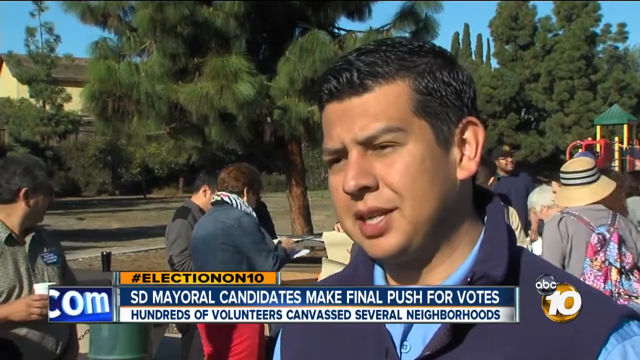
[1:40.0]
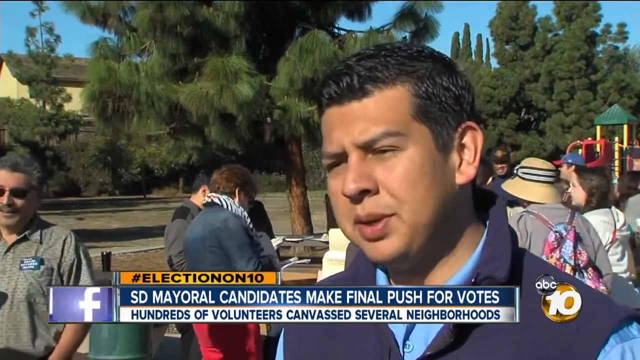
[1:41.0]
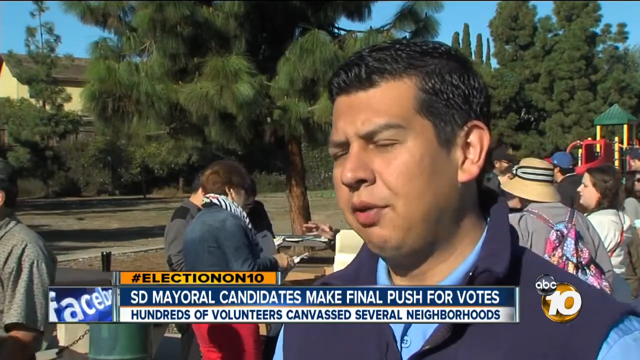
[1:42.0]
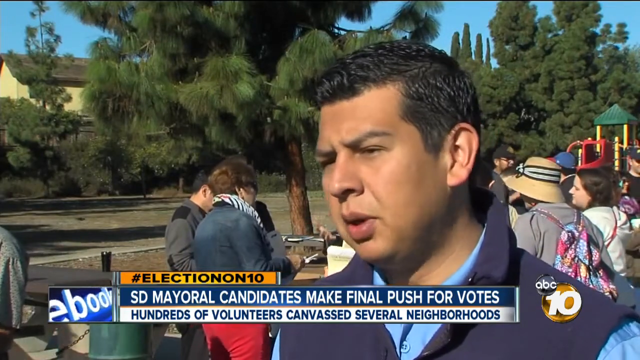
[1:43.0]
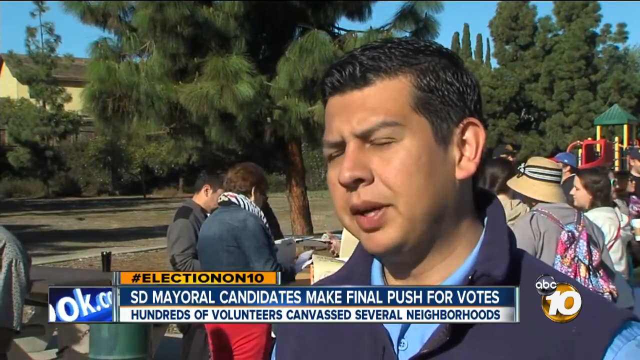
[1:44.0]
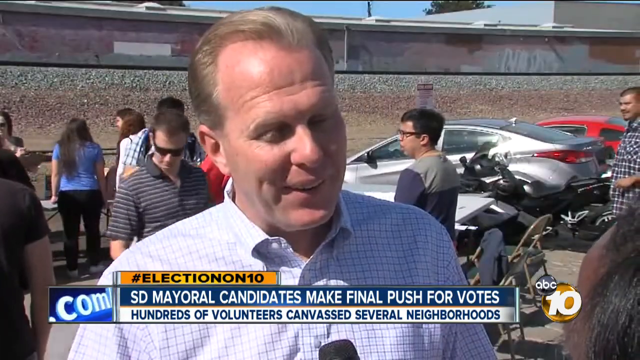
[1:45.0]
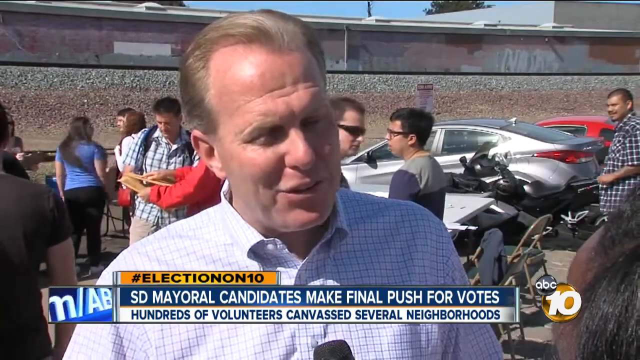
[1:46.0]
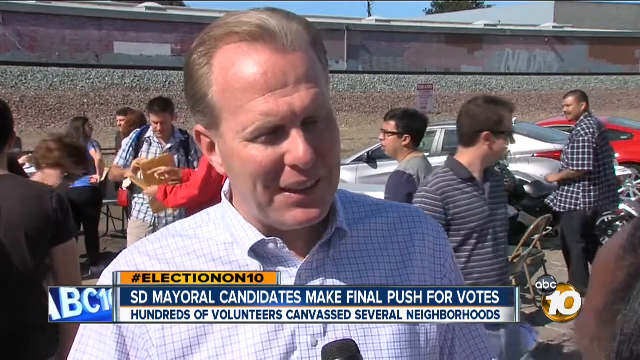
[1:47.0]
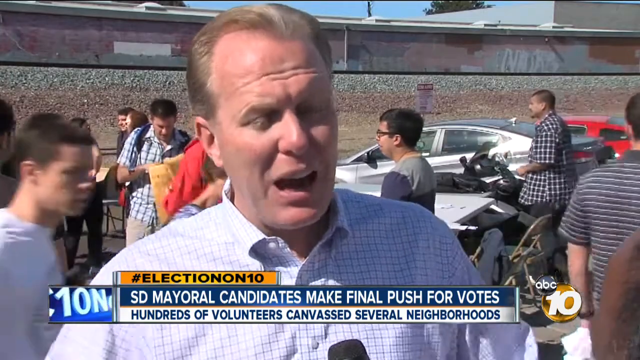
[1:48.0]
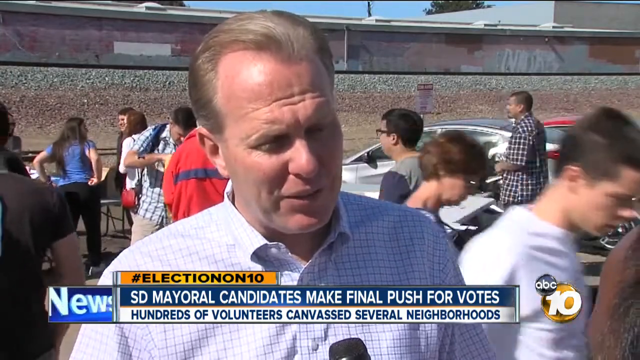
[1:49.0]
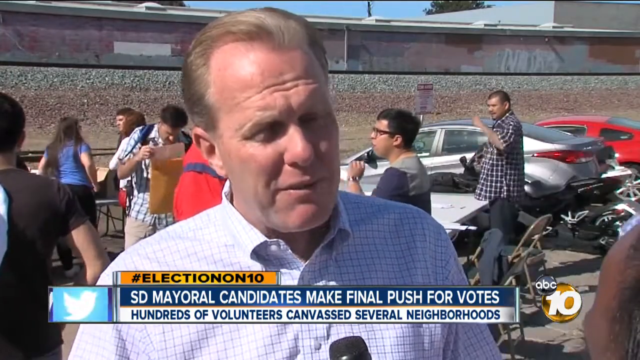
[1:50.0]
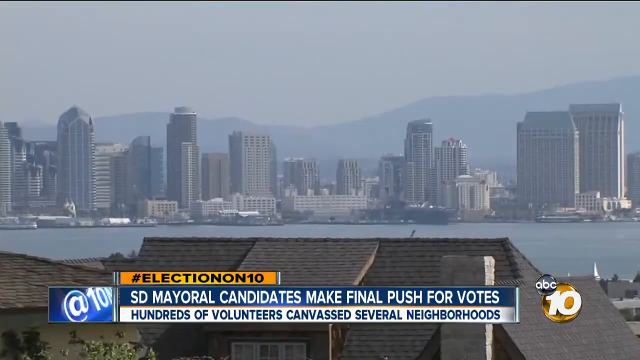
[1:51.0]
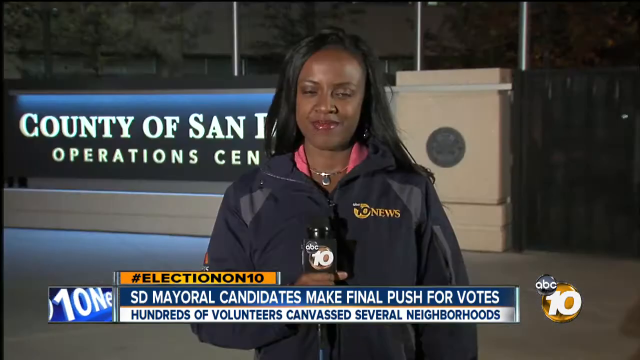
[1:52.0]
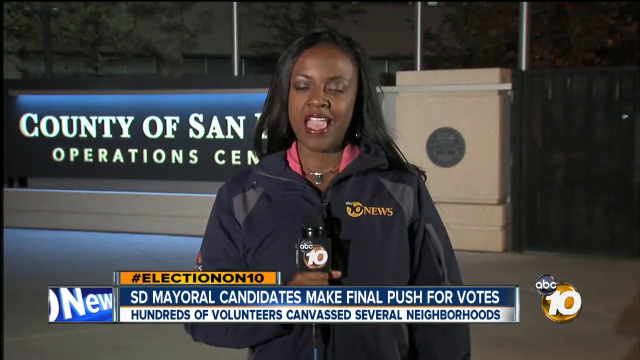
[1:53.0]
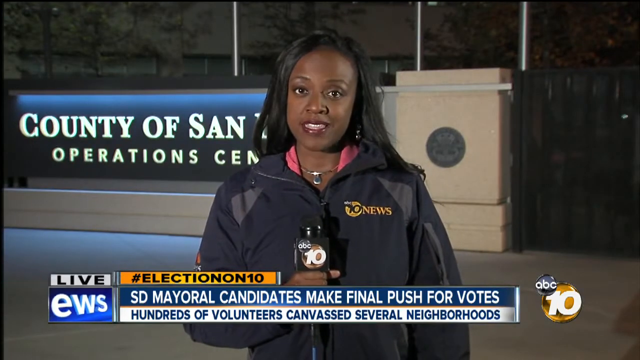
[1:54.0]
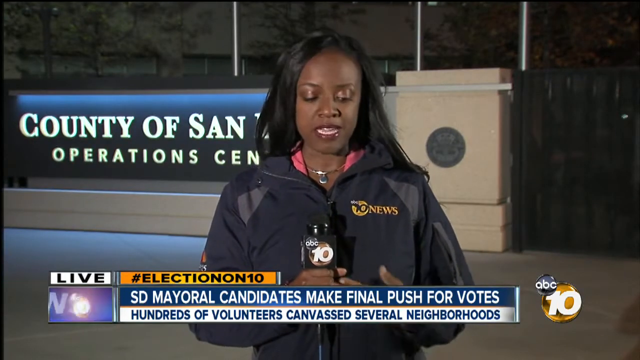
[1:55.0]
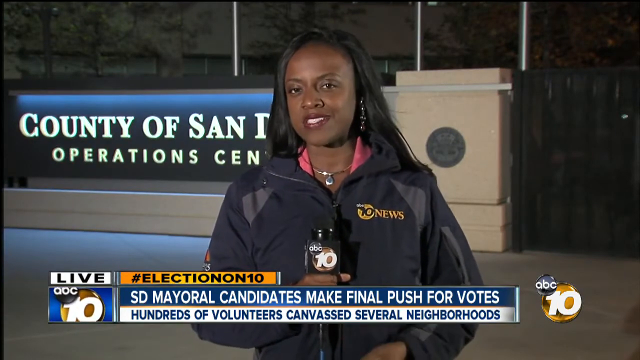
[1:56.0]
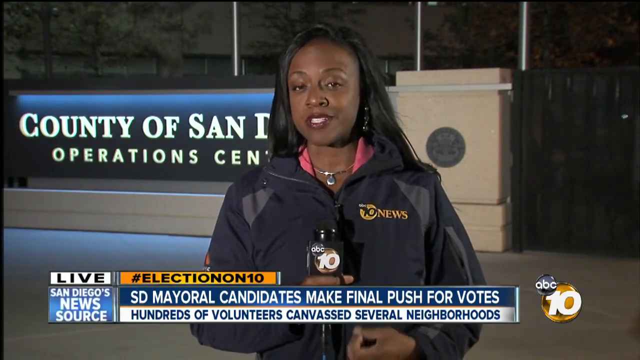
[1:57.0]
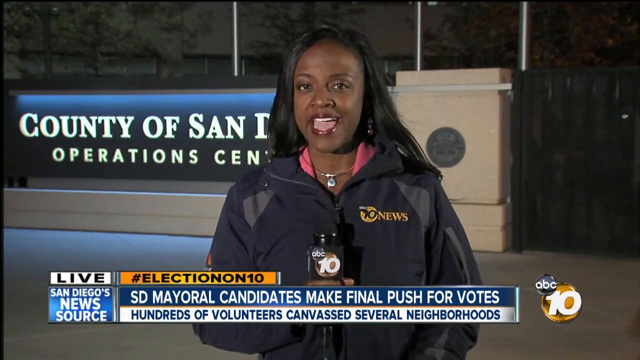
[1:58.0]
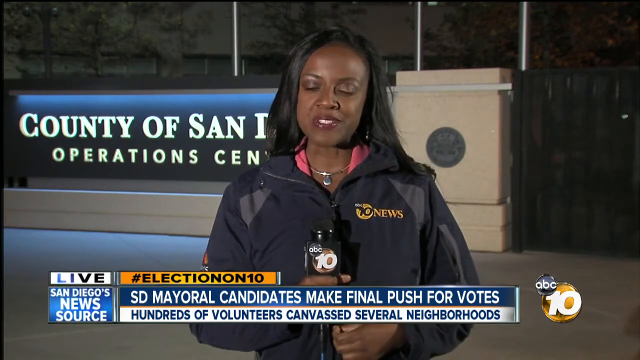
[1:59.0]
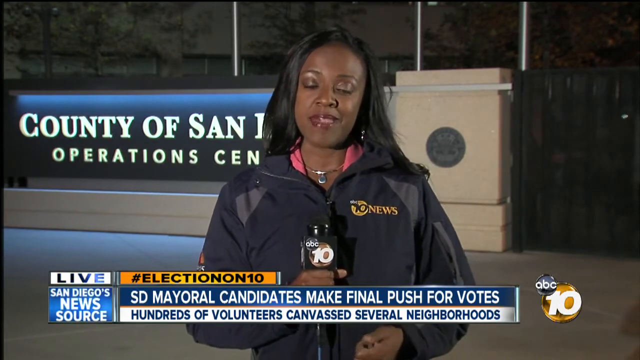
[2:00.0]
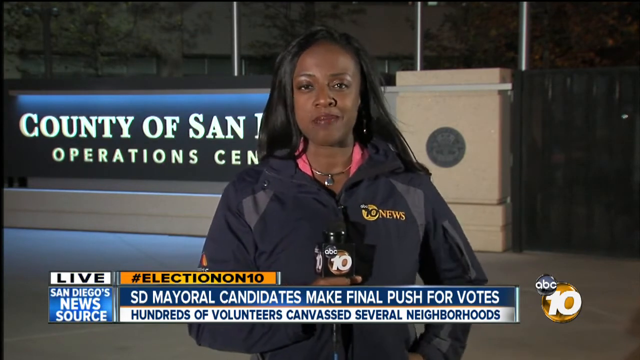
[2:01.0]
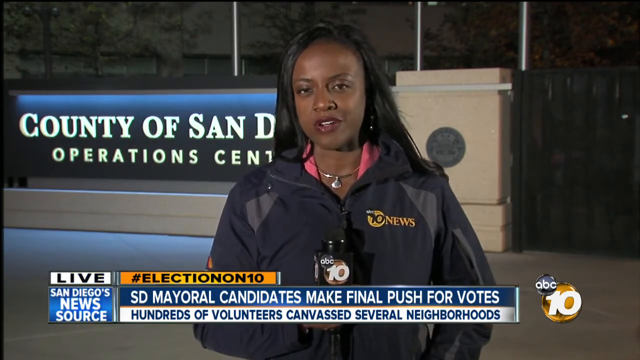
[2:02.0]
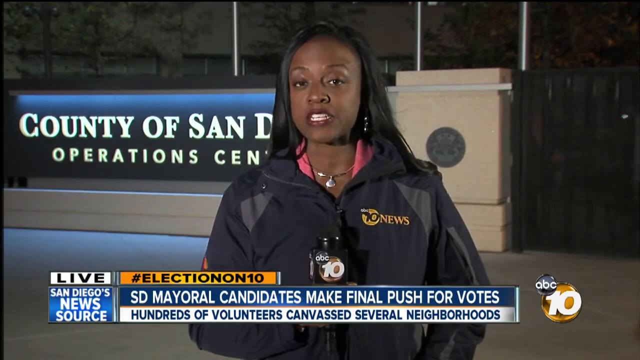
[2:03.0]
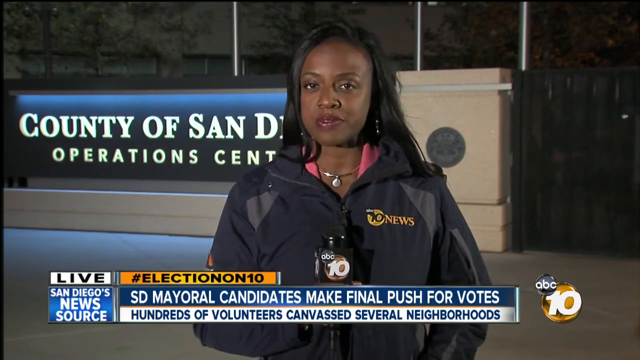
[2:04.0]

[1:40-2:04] The same man with dark hair, a lighter shirt and a darker coat appears again, standing on the right of the screen with a lot of movement behind him. Directly behind him is somebody wearing a blue and pink backpack with what looks like a checkered effect, and a beige sun hat. Another view then shows the man in the check shirt standing and facing the camera, in the same view as before, with people on his right and left. The same cars are in the upper right section, the red one and the silver one on the left. Beside the man's right shoulder are two pushchairs.